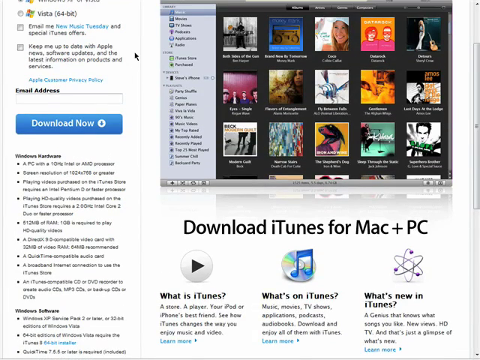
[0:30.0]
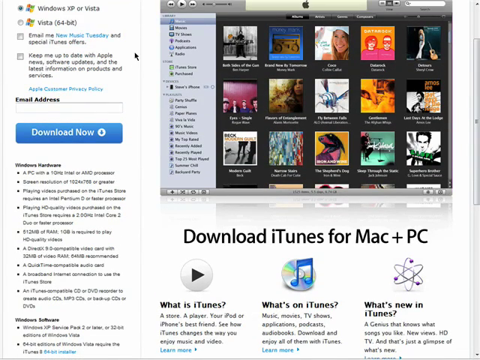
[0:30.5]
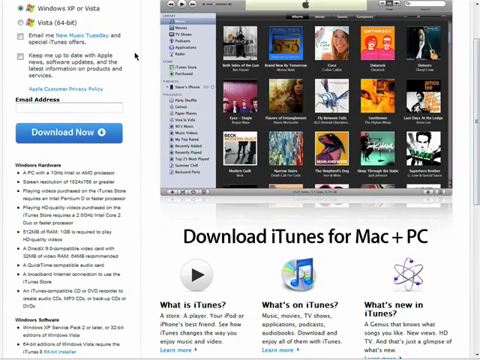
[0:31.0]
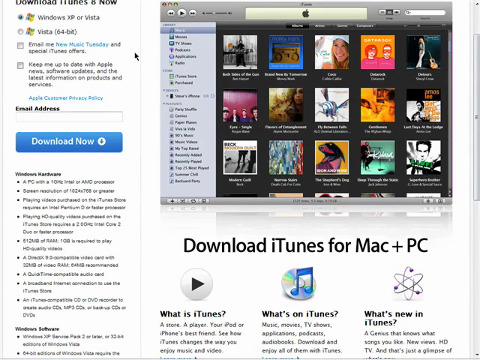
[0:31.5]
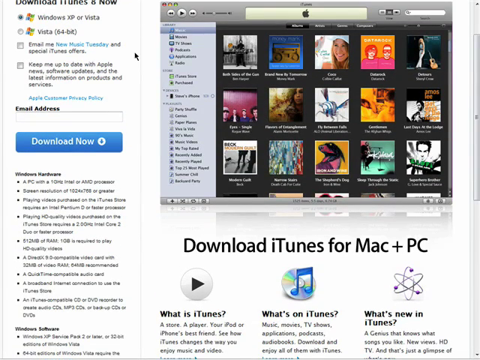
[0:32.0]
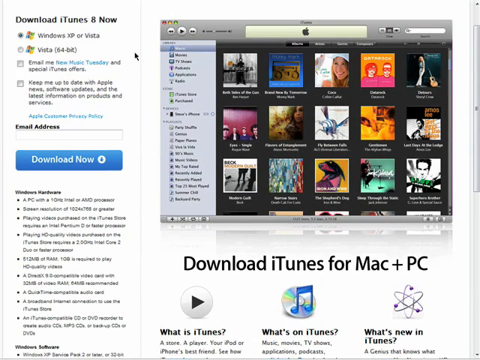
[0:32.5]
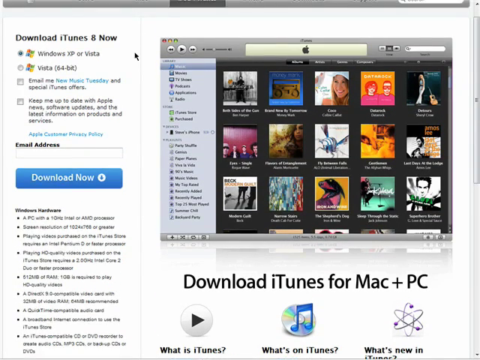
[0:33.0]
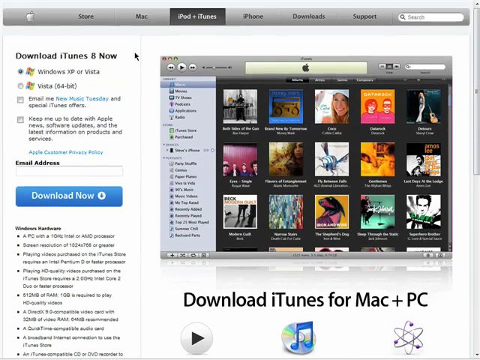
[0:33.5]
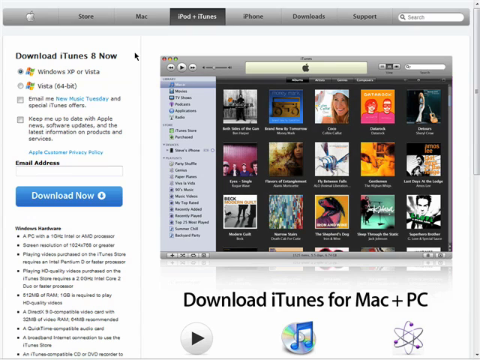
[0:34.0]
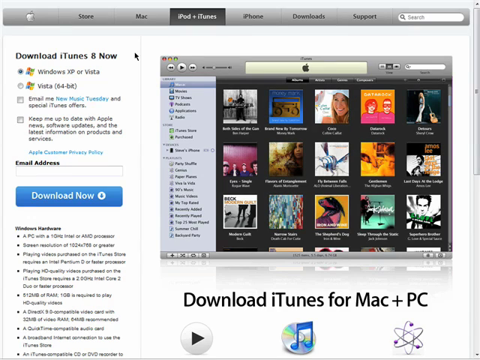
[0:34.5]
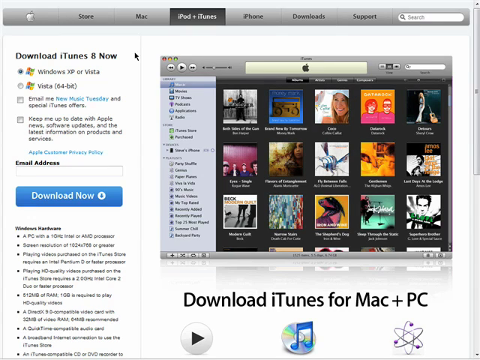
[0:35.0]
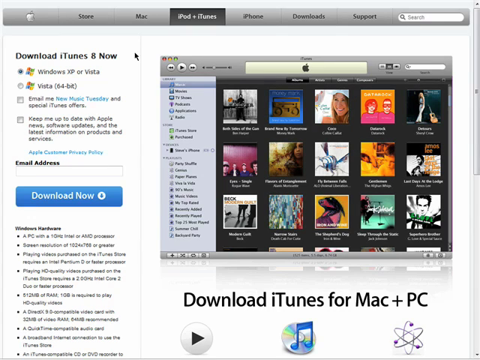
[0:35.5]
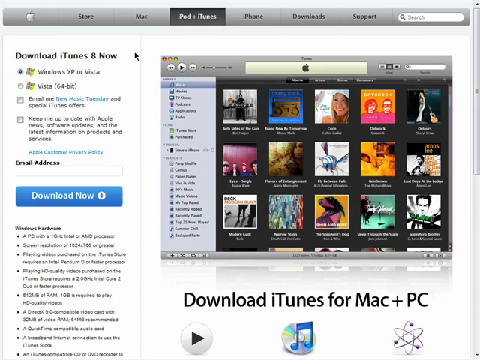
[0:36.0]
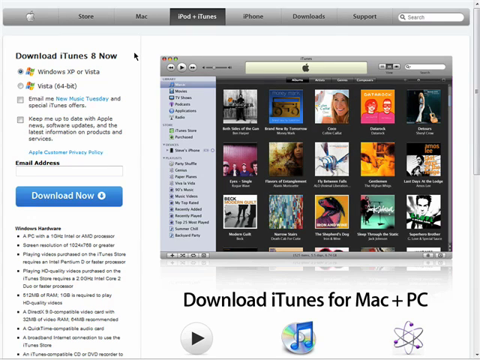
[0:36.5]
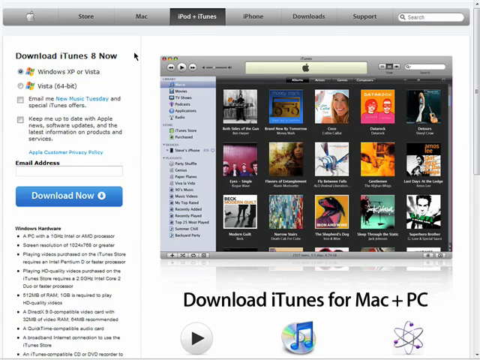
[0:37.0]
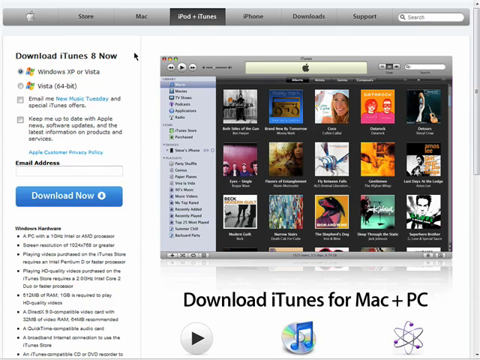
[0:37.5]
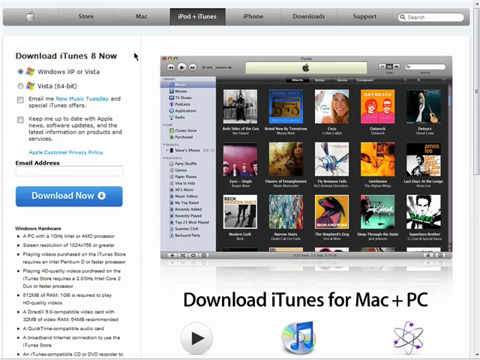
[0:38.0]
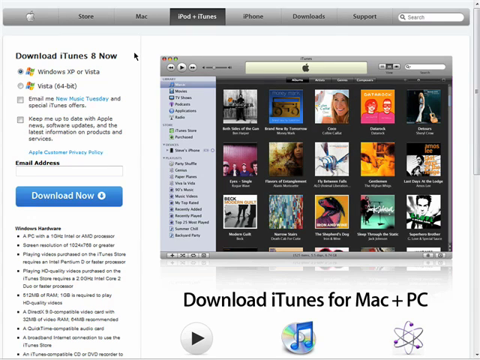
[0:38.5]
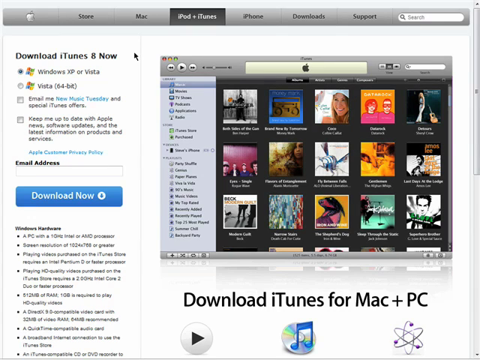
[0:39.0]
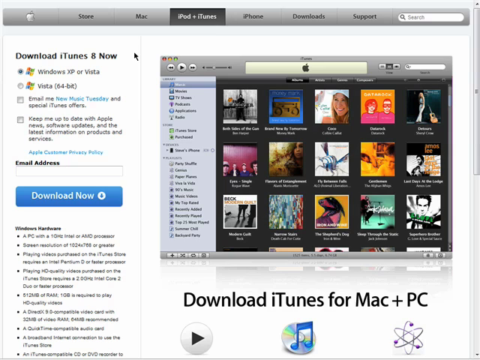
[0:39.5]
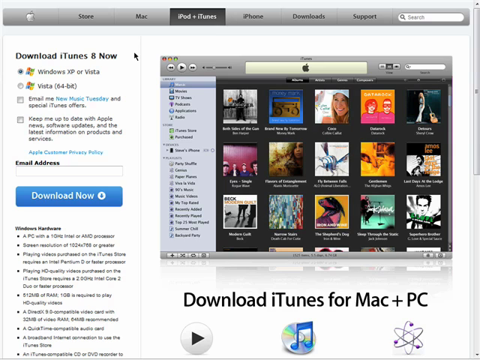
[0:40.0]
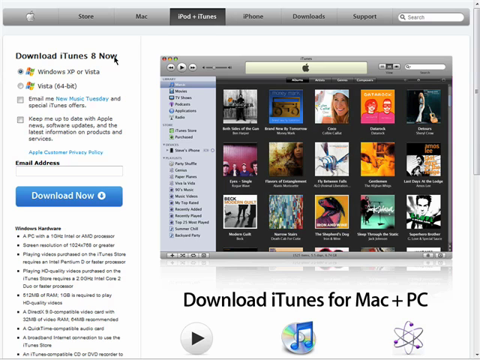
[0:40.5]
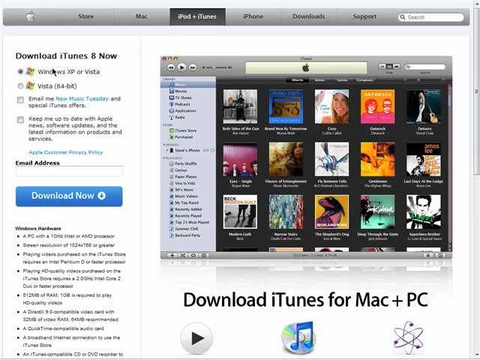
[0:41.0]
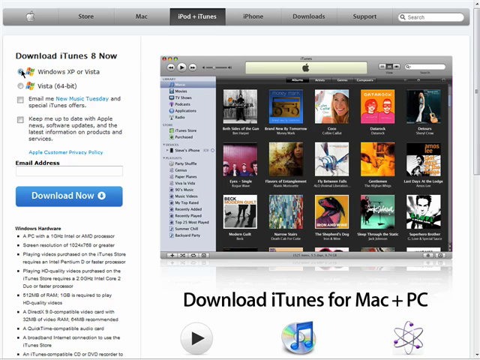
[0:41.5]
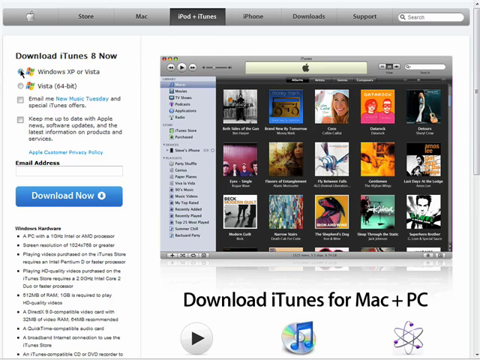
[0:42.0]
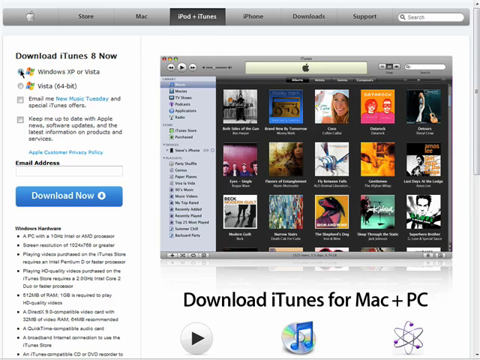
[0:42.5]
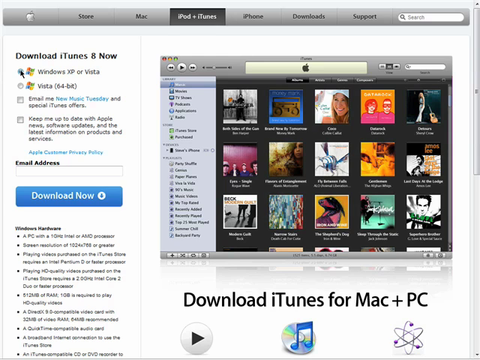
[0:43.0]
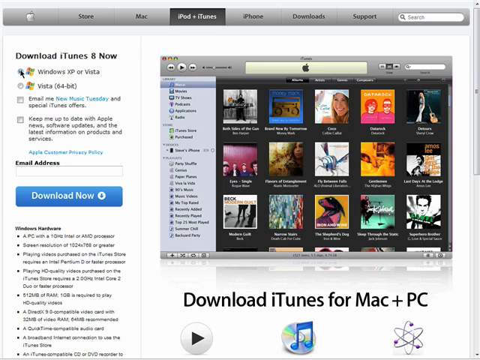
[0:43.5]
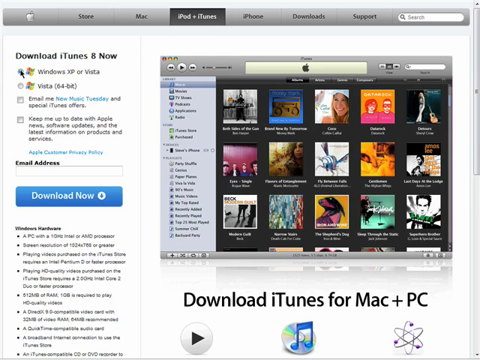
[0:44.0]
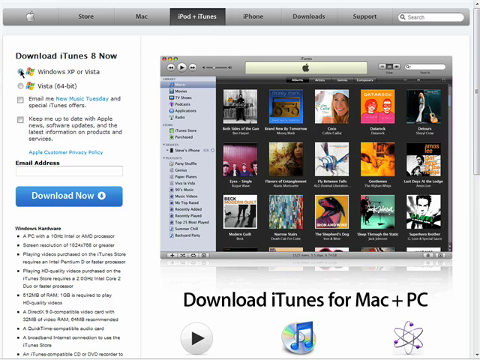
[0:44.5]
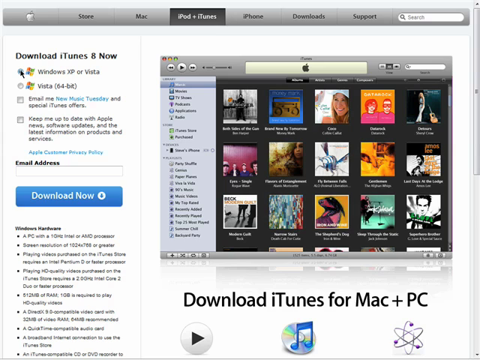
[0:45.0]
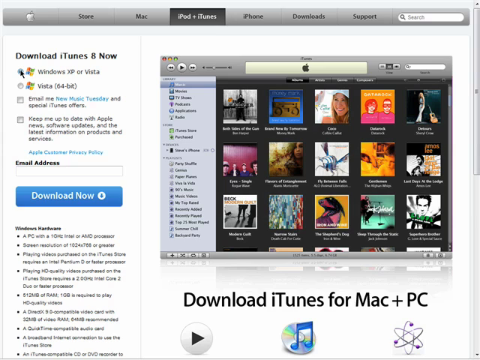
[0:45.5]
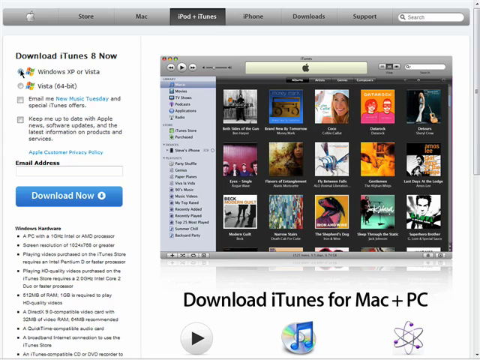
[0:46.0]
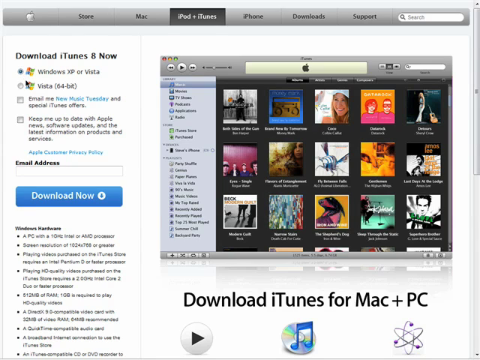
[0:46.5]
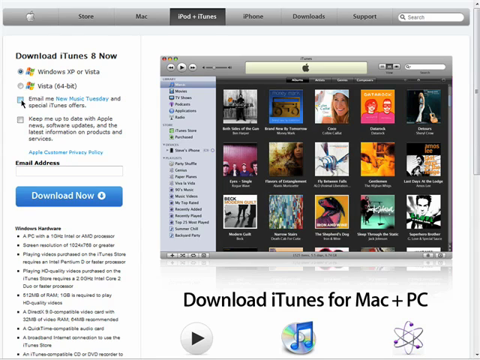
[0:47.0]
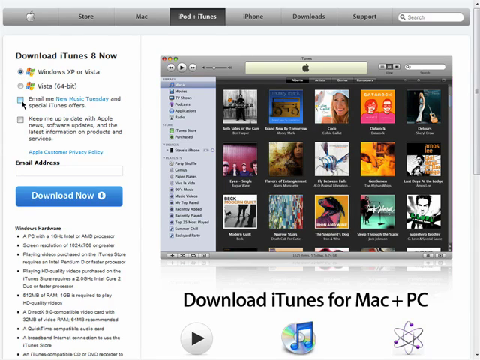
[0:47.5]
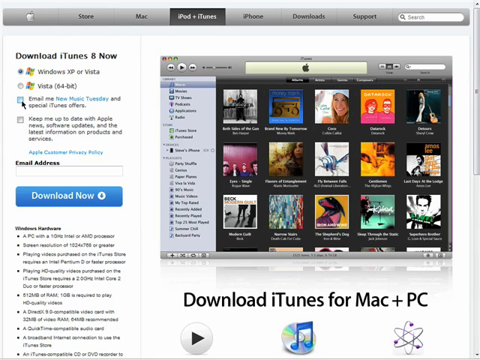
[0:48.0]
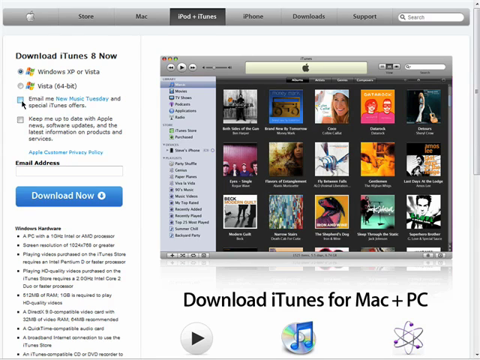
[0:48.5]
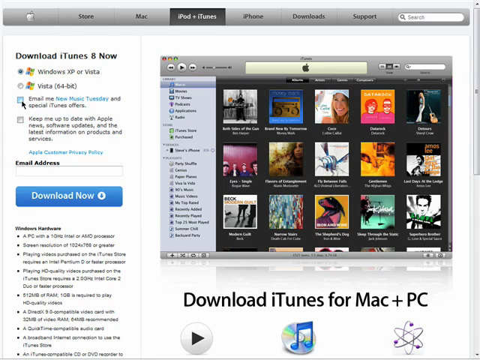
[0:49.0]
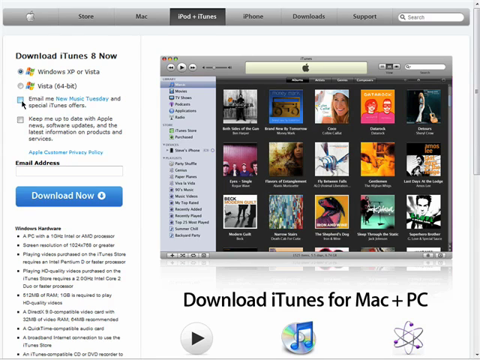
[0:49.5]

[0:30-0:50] The same page is still shown. On the right side it says "email address" in bold black. Above it, slightly blurry, the text appears to read "keep me up to date with Apple news software updates and the latest information on product and services." Underneath in blue is what looks like a customer privacy policy link. Above that it says "email me," followed by what may be "new music Tuesday and special iTunes offers." "Vista 64 bits" is also visible. On the left side it says "What is iTunes?", "What's on iTunes?" and "What's new in iTunes?" The person slowly scrolls back up to the top, where the tabs read Store, Mac, iPad plus iTunes, iPhone, Downloads and Support. The person hovers over the first checkbox and checks it, selecting Windows XP and Vista.